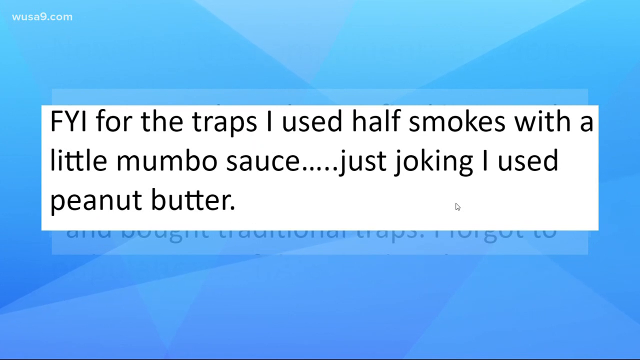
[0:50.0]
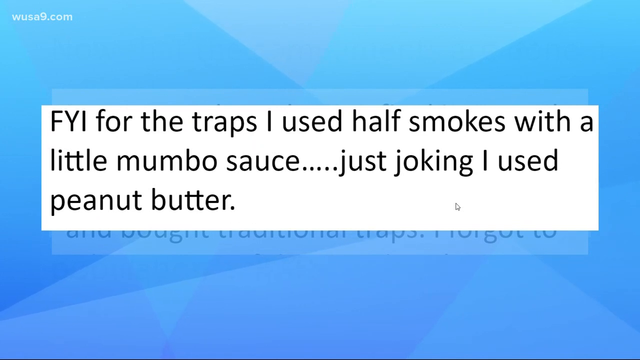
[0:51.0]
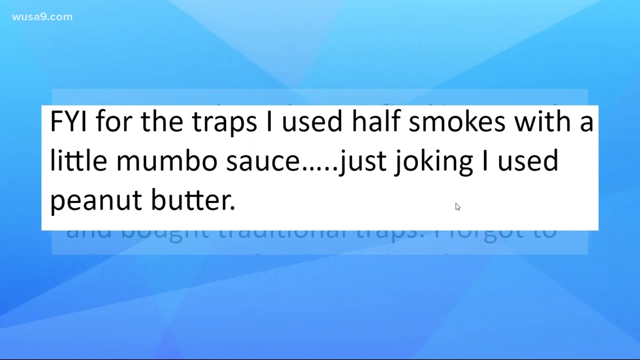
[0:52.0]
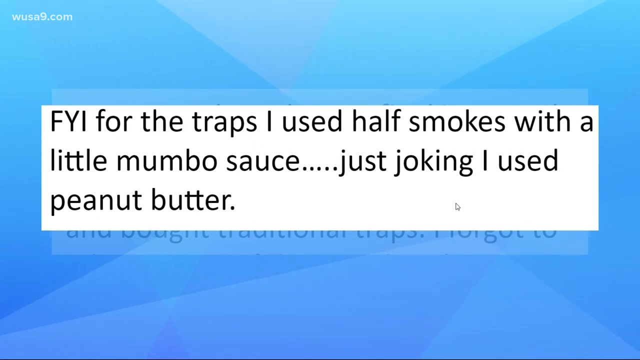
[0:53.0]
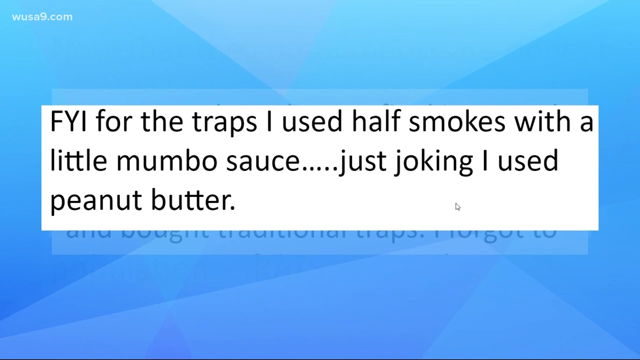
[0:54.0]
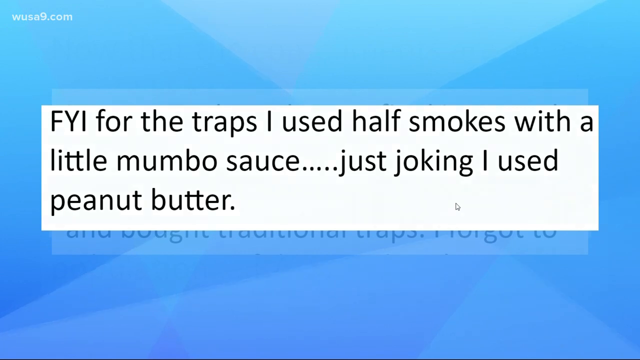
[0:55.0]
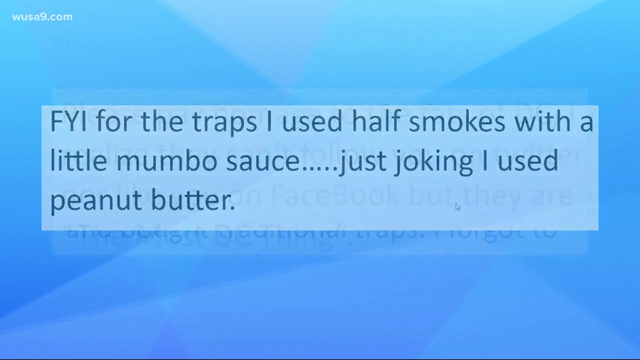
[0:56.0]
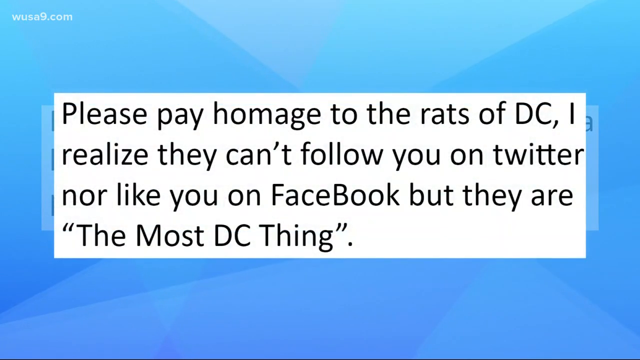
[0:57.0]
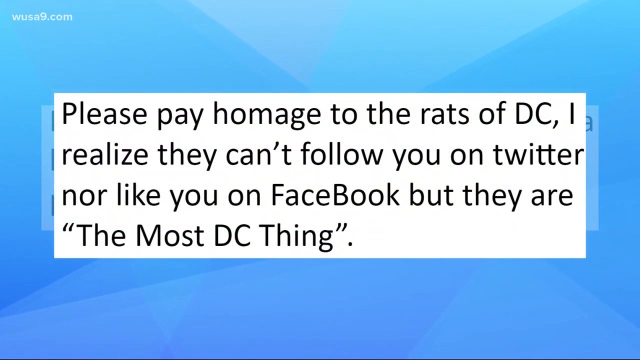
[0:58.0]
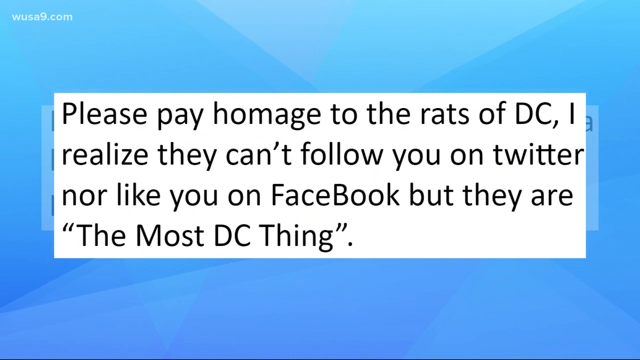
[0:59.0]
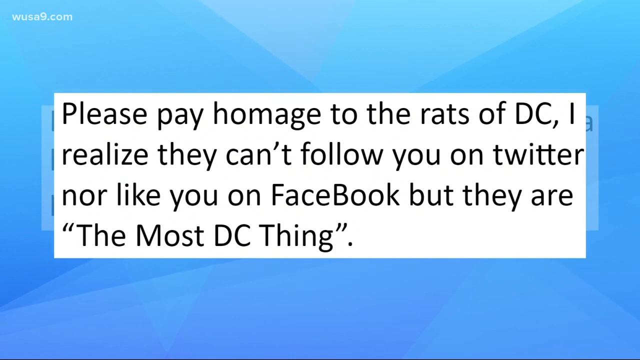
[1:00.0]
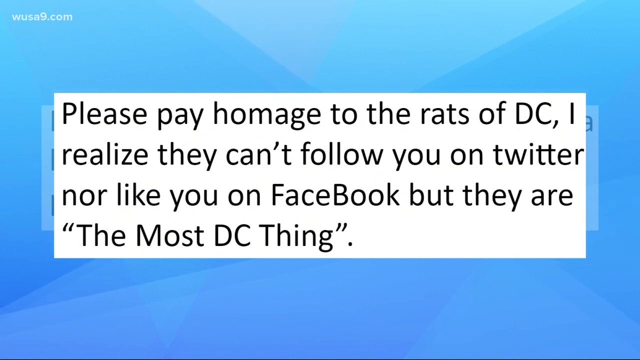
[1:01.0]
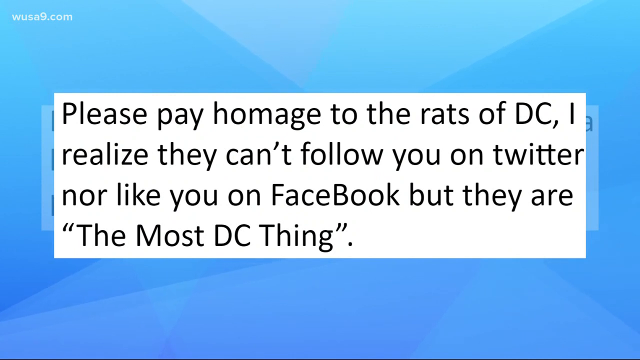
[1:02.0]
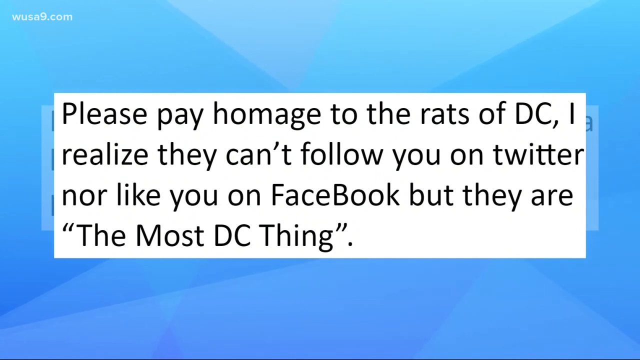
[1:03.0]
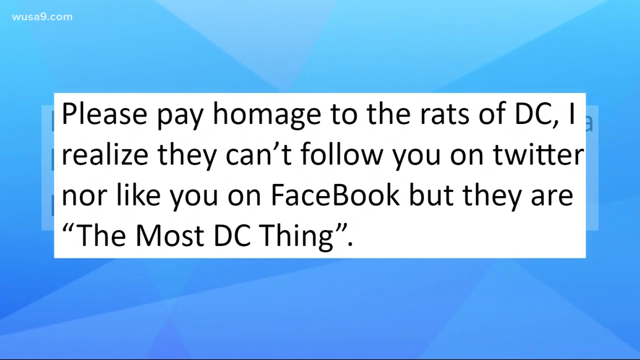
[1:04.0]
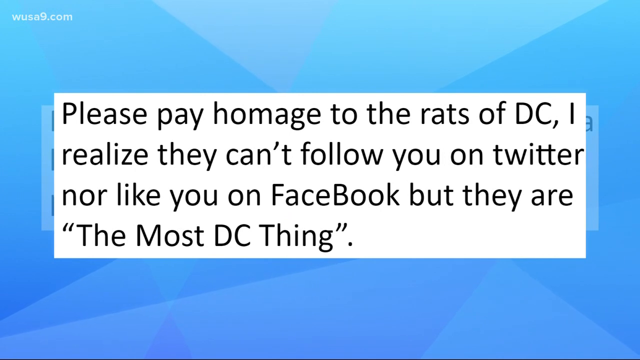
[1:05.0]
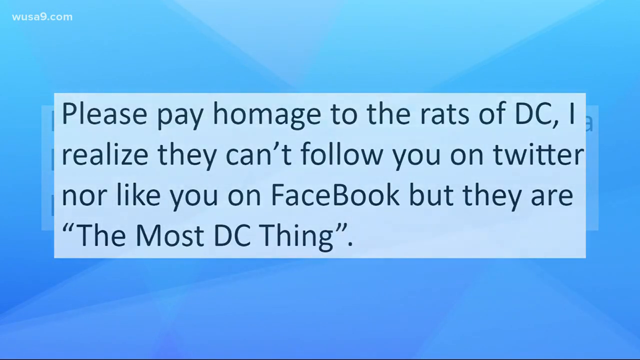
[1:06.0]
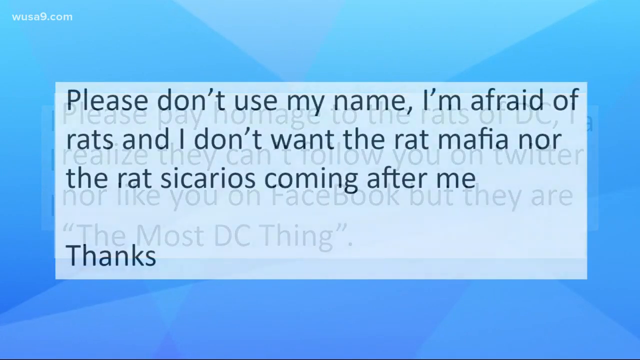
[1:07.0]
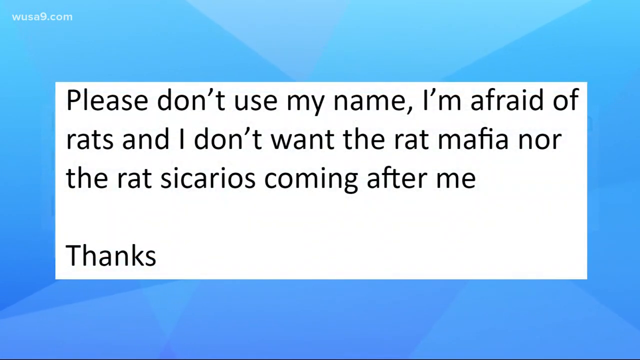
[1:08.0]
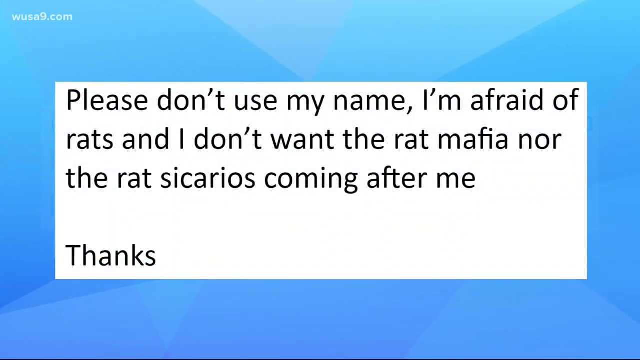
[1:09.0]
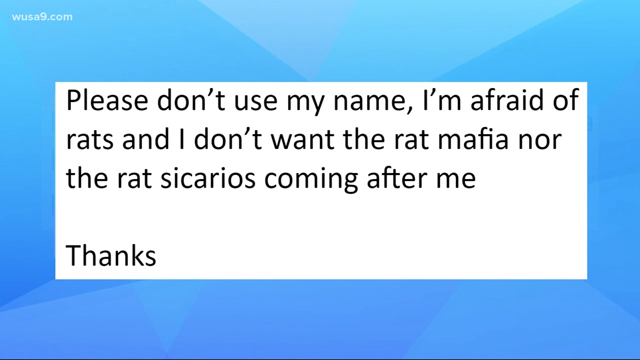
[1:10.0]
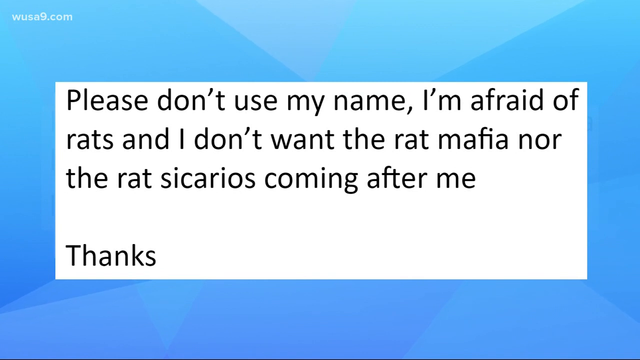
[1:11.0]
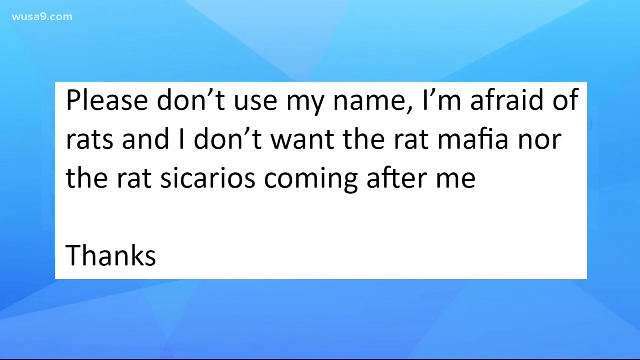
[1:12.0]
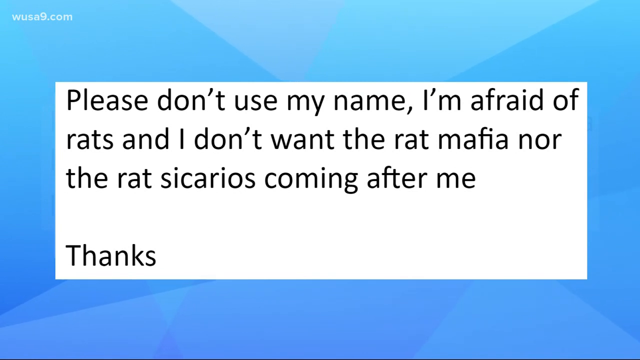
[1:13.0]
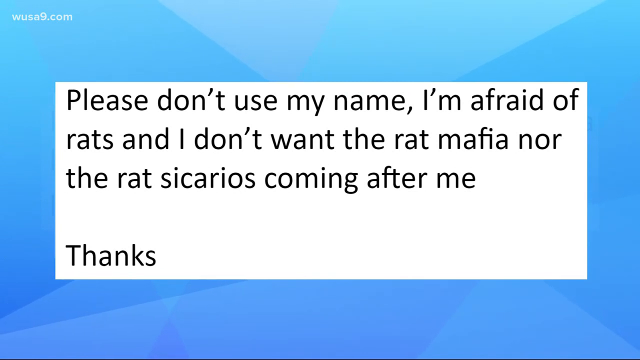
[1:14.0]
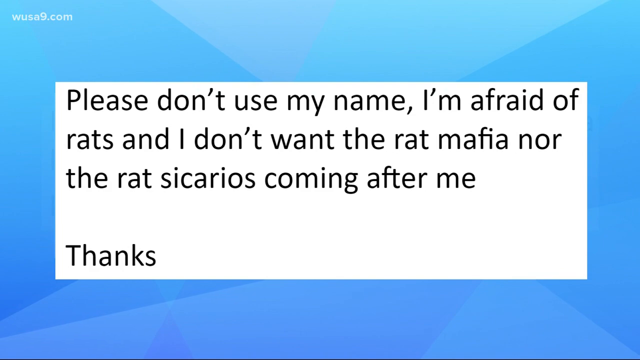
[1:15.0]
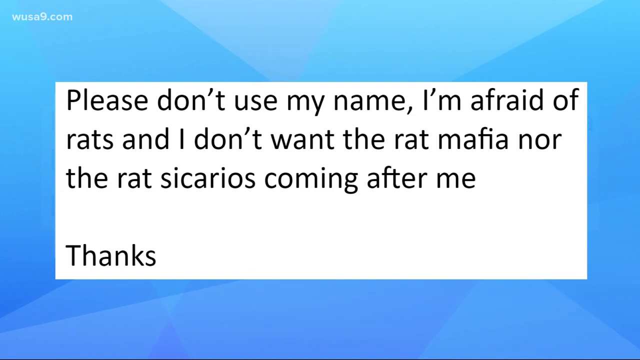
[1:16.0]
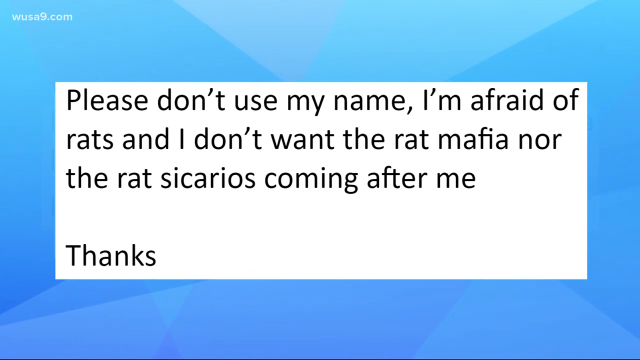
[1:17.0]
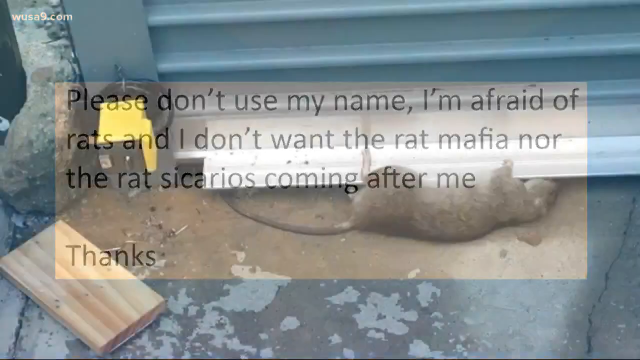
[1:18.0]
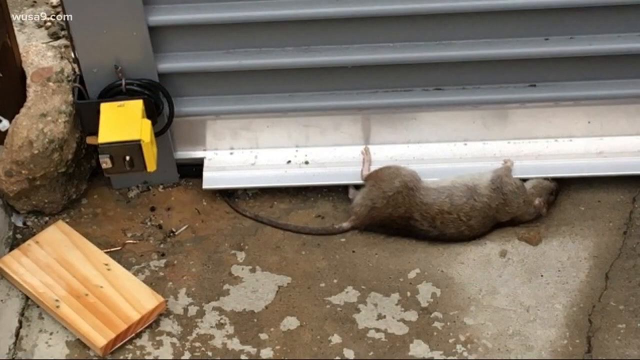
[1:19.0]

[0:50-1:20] A screenshot on a blue background shows the message 'fyi for the traps I used half smokes with a little mumbo sauce... just joking I use peanut butter'. It disappears and is replaced by another screenshot with a humorous message: 'please pay homage to the rats of D.C. I realize they can't follow you on Twitter or like you on Facebook, but they are the most D.C. thing. Thank you.', with the words 'the most D.C. thing' written in quotes. That screenshot leaves the screen and another pops up with a sarcastic message: 'Please don't use my name. I'm afraid of rats and I don't want the rat mafia, nor, the rat sicarios coming after me. Thanks'. The video then cuts briefly to a picture of a rat trapped underneath a metallic sheet.